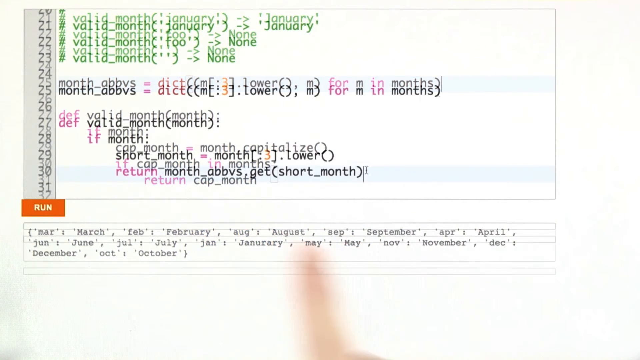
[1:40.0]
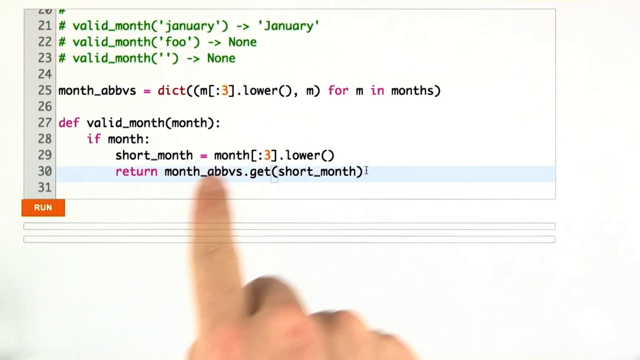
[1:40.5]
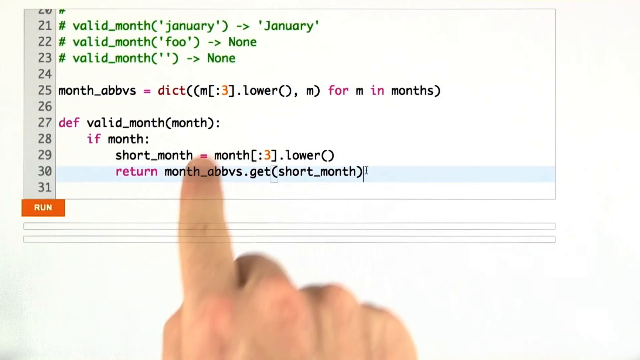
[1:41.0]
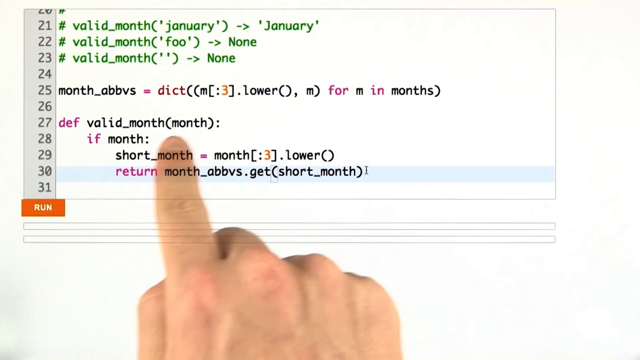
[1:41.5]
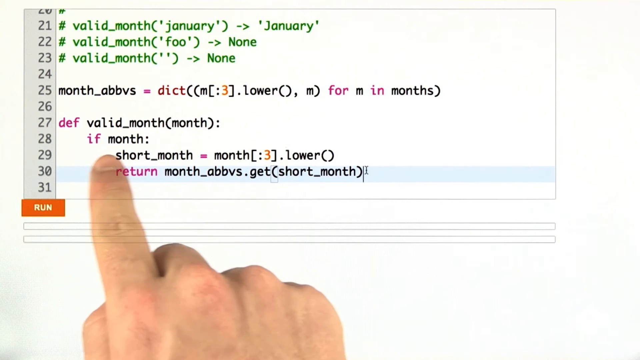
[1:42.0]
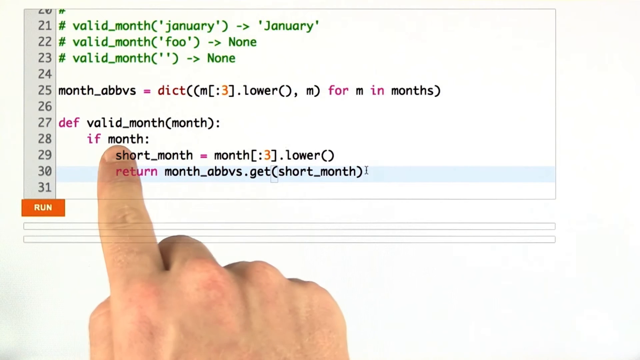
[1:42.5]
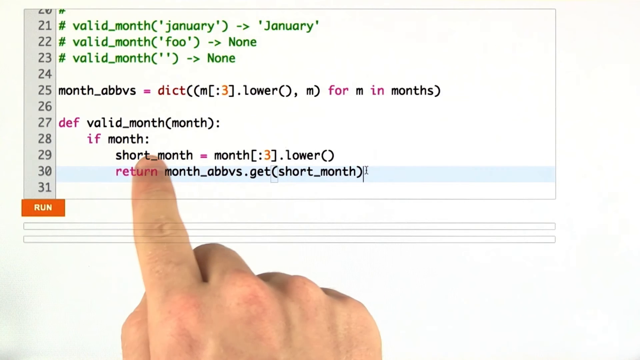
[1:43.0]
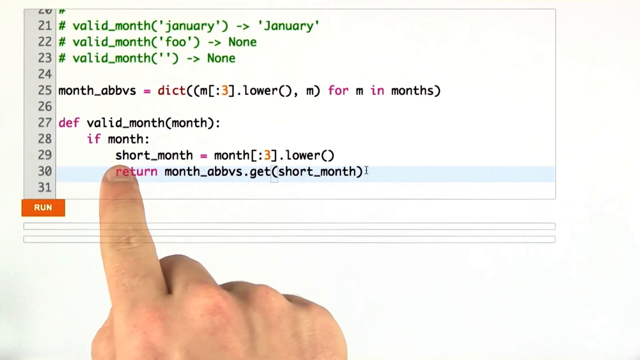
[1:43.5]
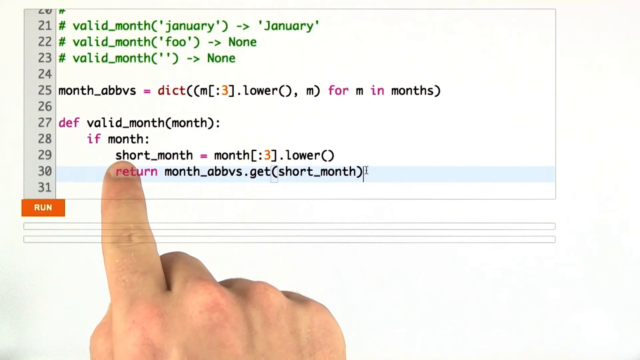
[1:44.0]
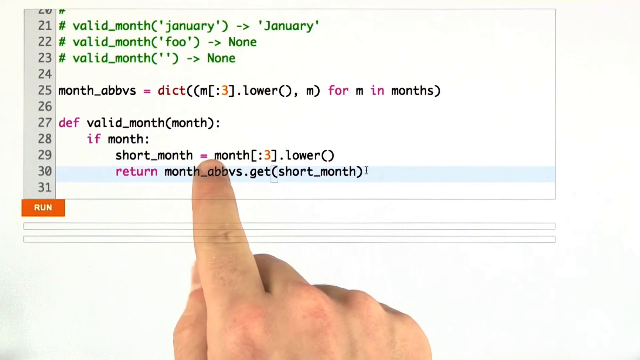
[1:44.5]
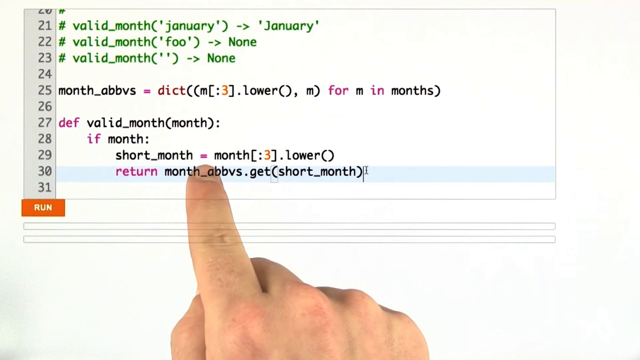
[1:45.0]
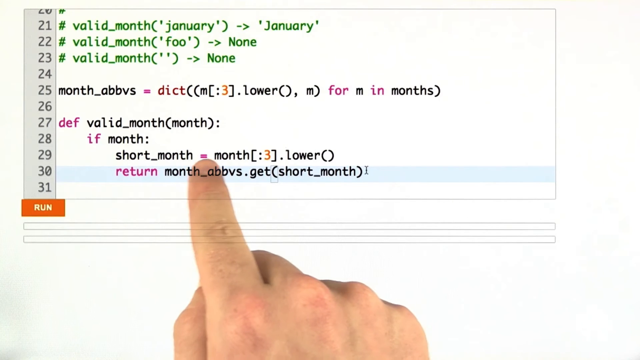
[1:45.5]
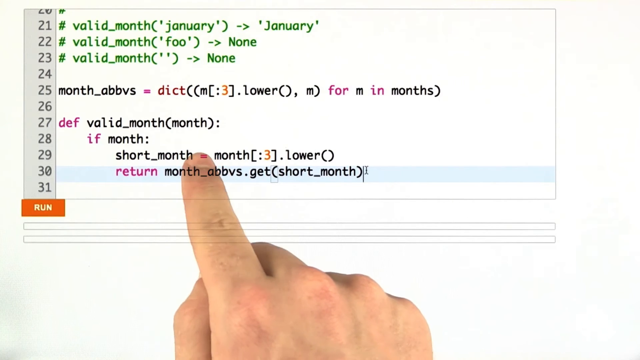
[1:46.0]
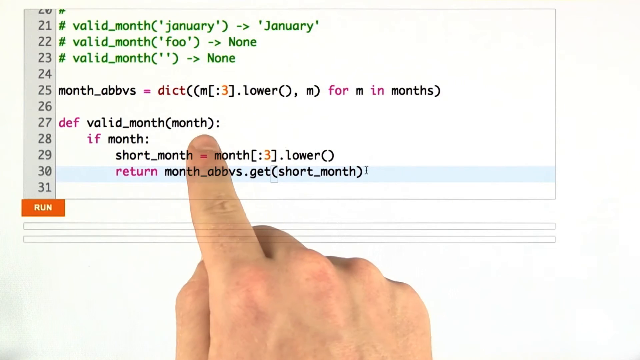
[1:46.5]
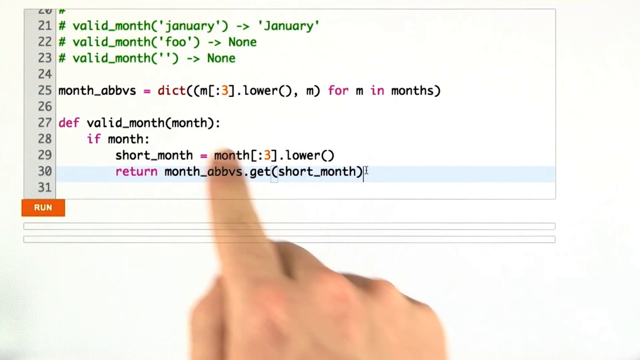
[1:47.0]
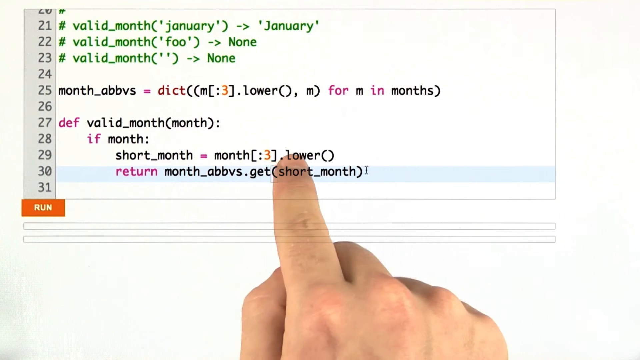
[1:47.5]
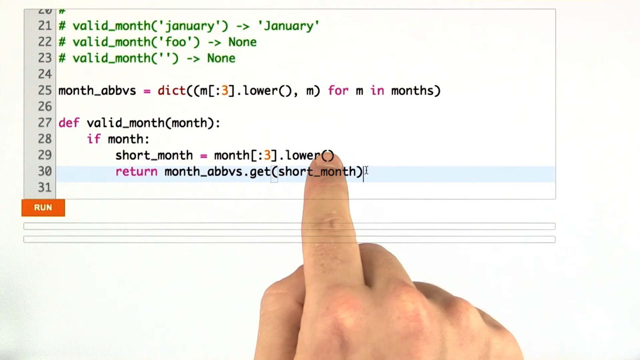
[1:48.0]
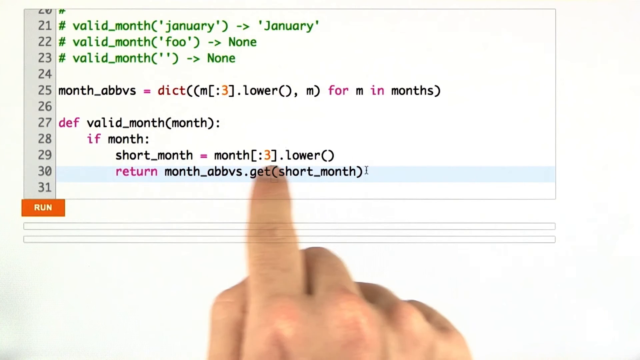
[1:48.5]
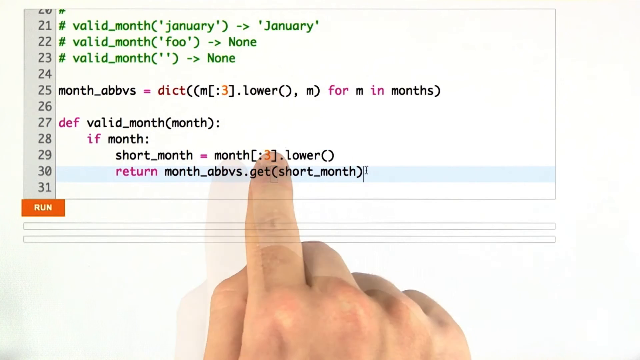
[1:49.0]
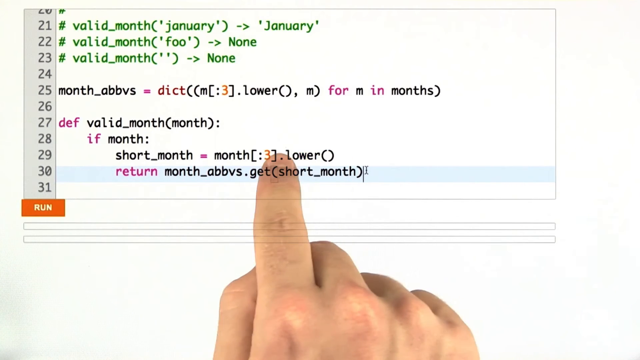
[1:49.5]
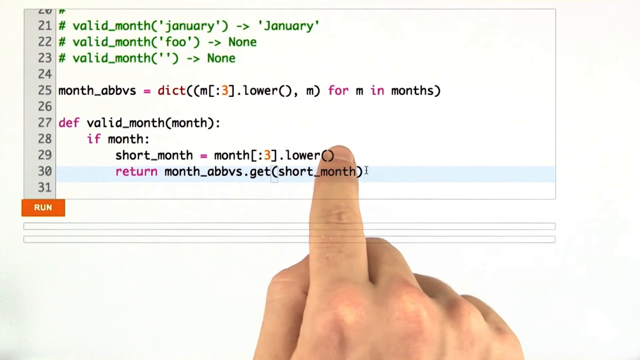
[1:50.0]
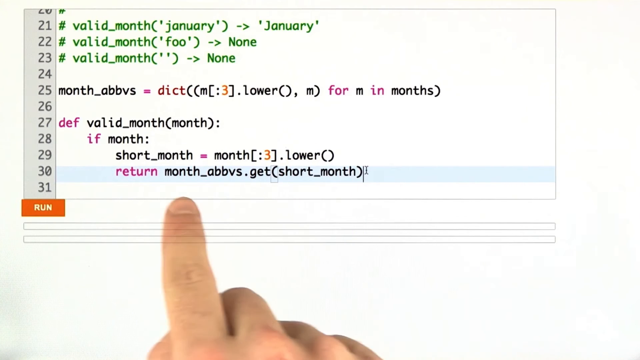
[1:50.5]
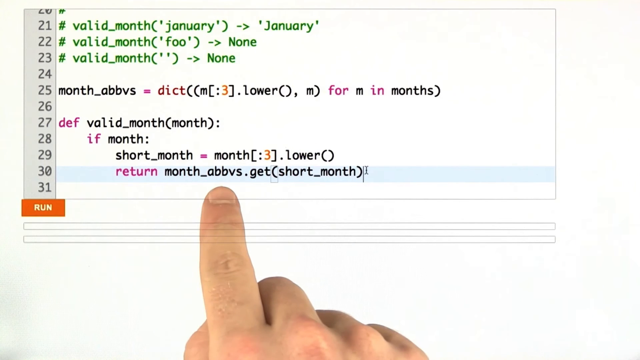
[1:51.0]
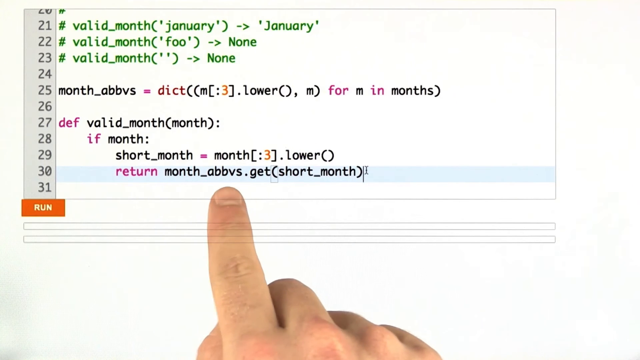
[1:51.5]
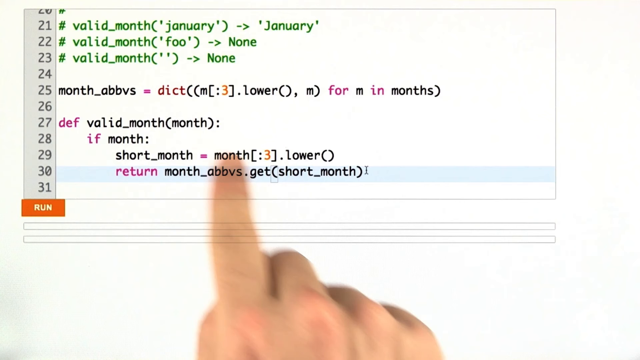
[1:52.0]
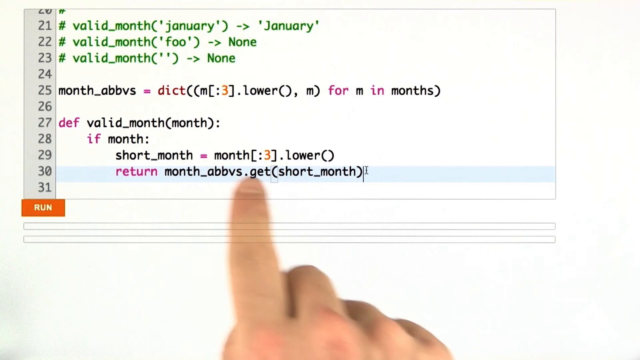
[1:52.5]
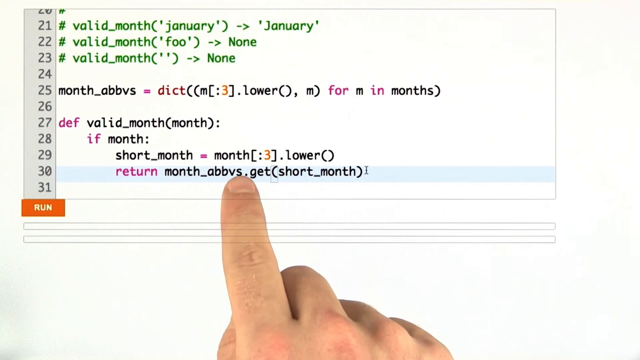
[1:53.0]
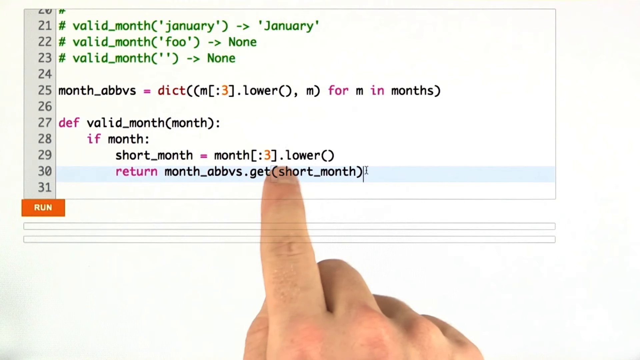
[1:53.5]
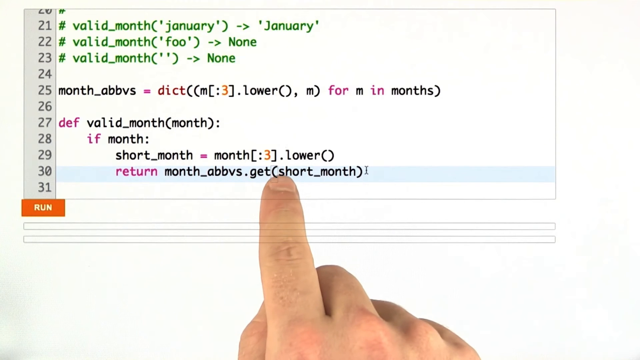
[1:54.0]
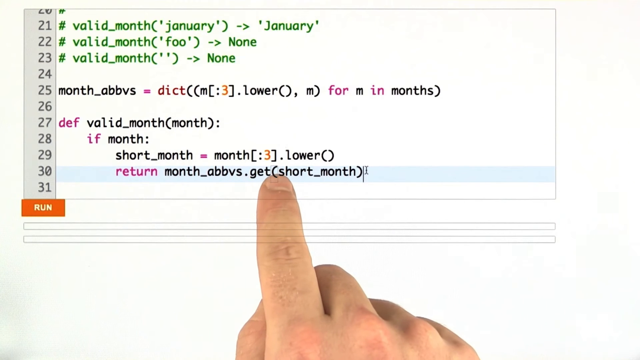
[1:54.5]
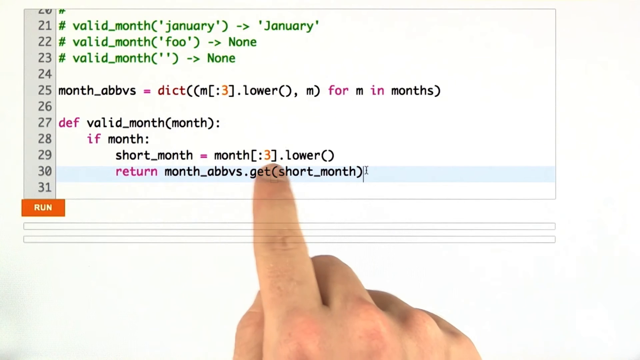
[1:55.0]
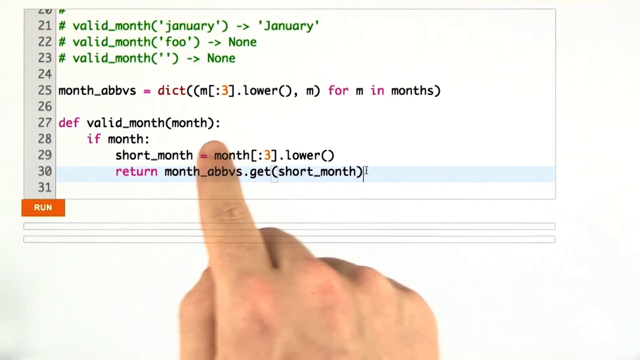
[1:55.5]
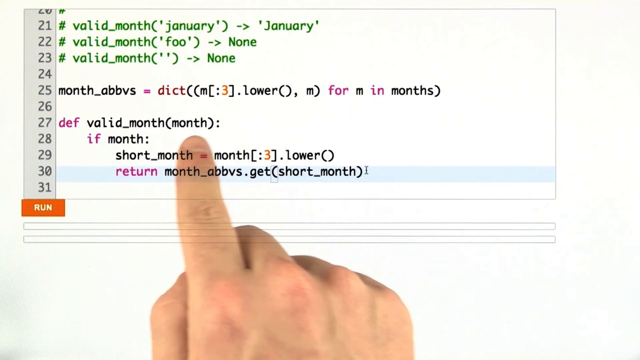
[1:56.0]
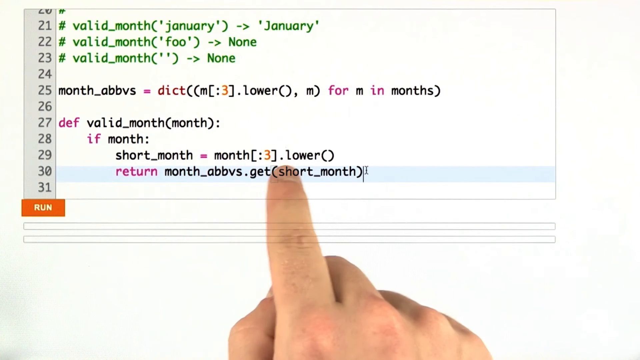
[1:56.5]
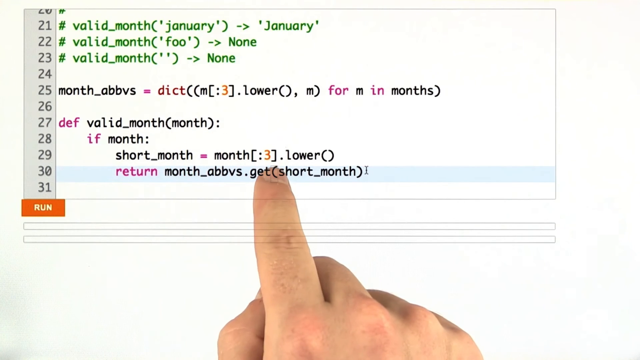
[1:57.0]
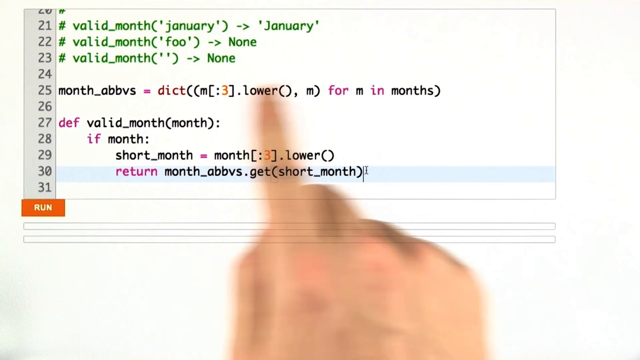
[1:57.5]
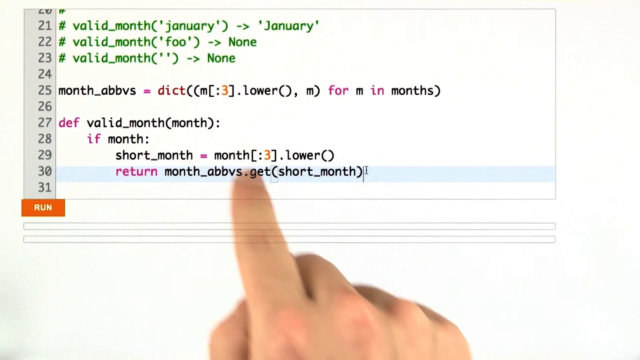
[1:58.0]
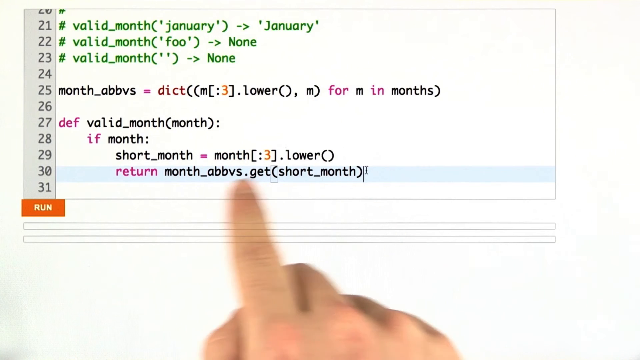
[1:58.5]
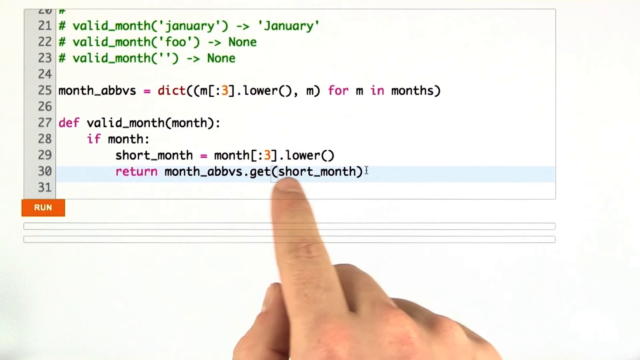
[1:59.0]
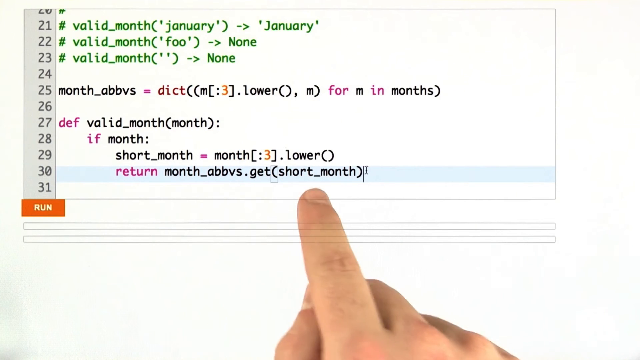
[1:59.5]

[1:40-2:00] A human hand holds a black digital pen, going over the wording of a program about the months of the year and whether they are capitalized. The letters at the top of the screen are printed in green. In the middle of the screen, the first word, "def", is in pink, followed in black by "valid month" with "month" in parentheses. On the next line, the word "if" is in pink and "month" is in black. Line 27 says "cap month equals month capitalize." The months of the year are listed from January through December. The view then moves to another screen where the digital pen is no longer in the picture; a human hand points its index finger in different directions. At the very bottom, the months of the year are listed in much smaller print. The index finger simply points to the months, hovering back and forth over the words.